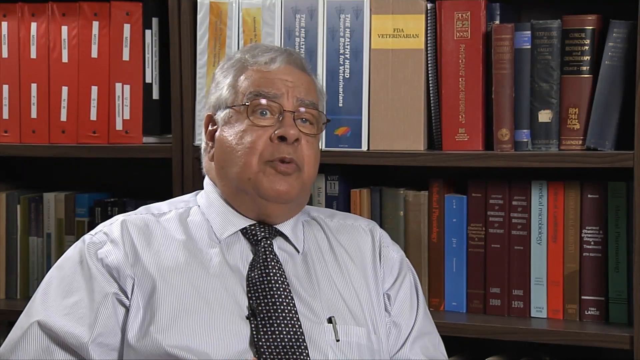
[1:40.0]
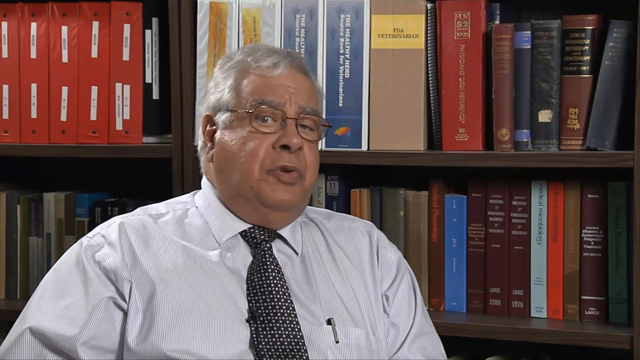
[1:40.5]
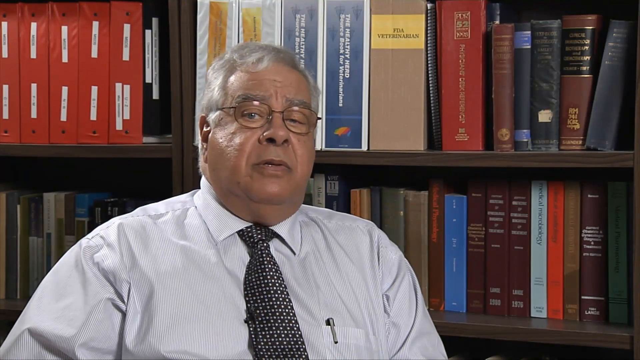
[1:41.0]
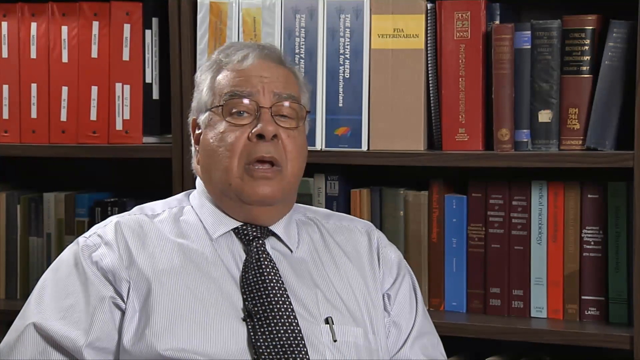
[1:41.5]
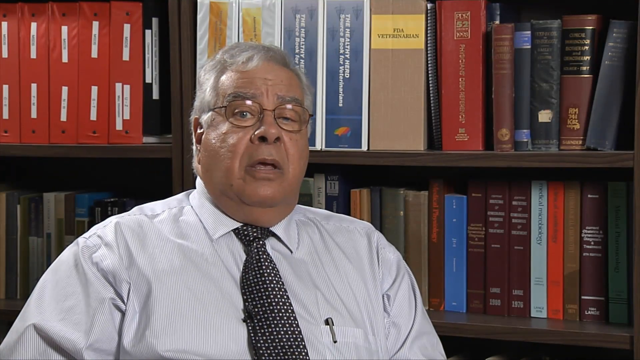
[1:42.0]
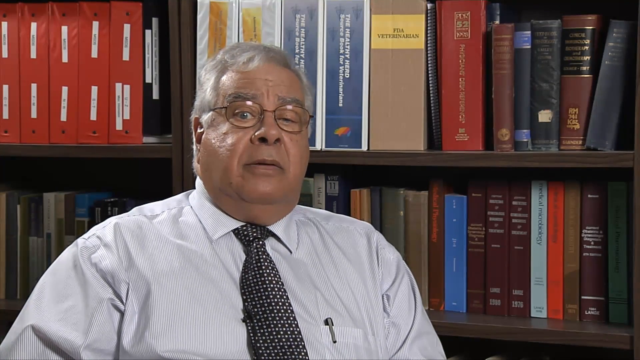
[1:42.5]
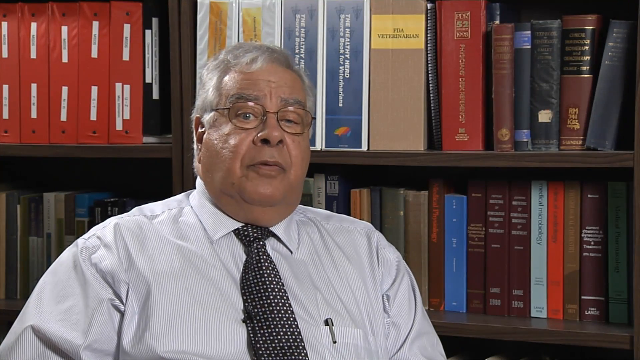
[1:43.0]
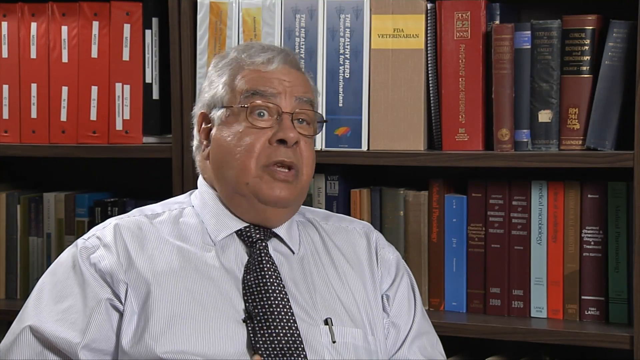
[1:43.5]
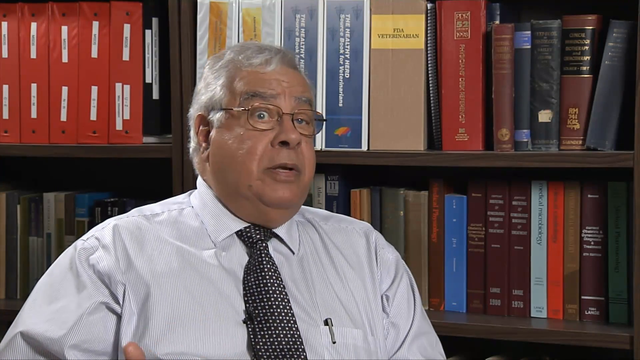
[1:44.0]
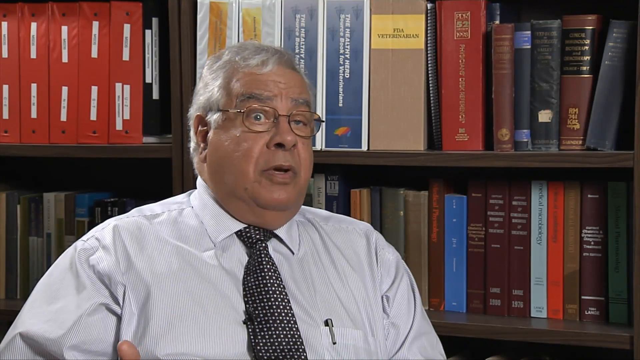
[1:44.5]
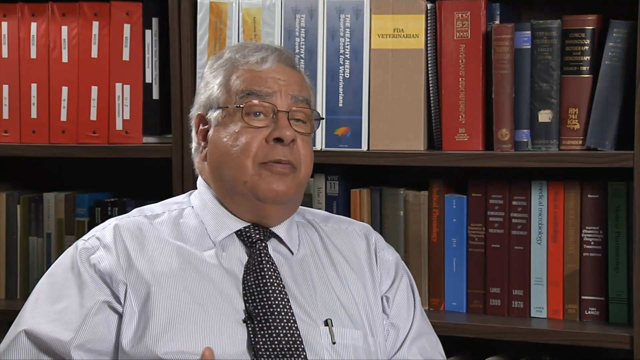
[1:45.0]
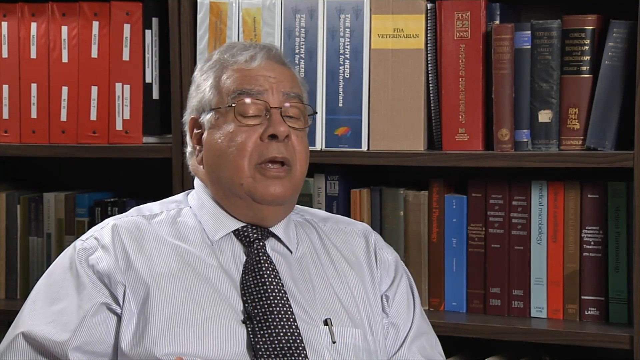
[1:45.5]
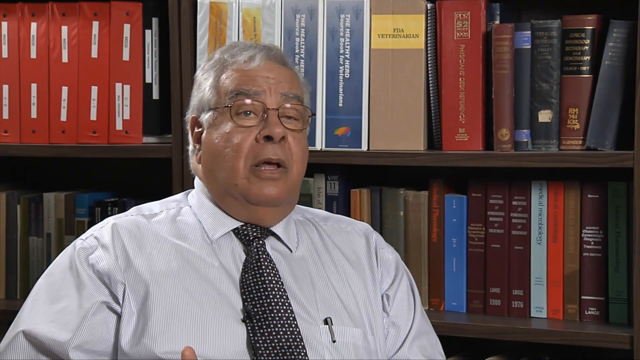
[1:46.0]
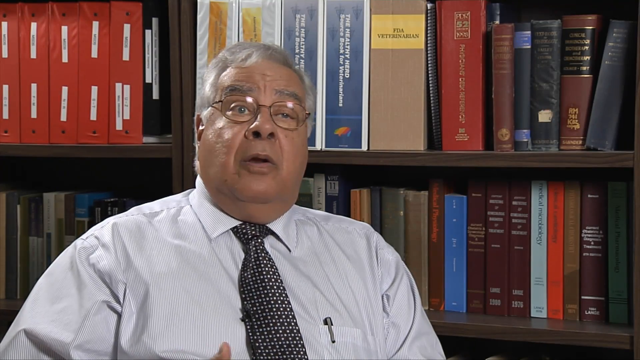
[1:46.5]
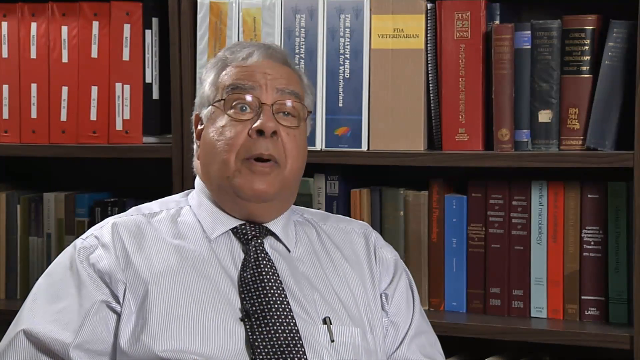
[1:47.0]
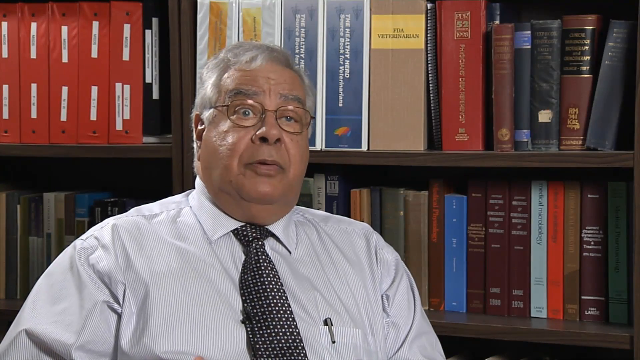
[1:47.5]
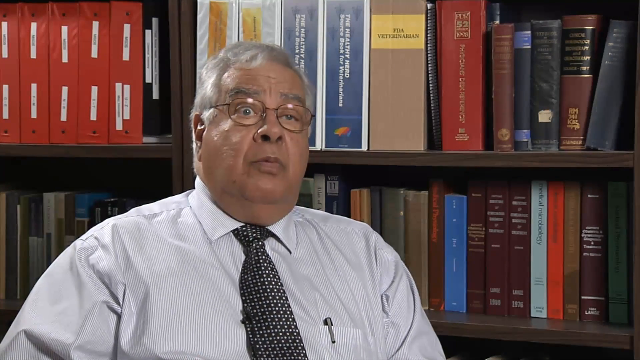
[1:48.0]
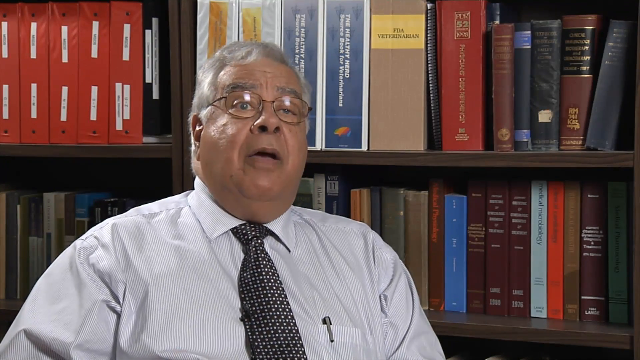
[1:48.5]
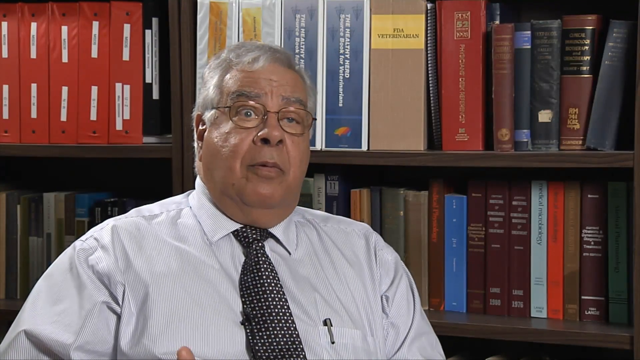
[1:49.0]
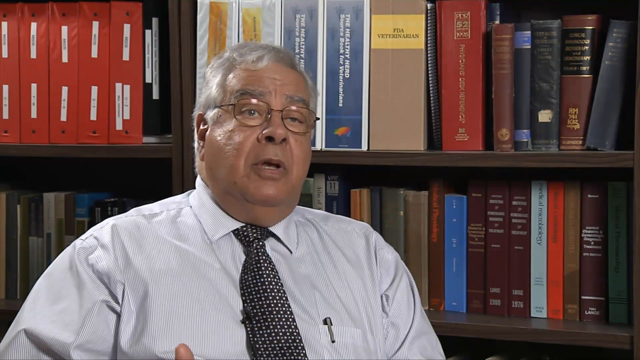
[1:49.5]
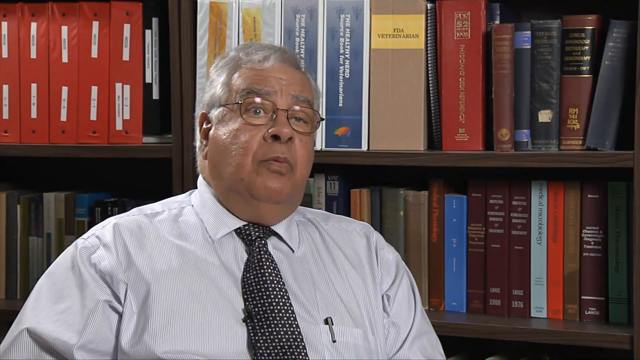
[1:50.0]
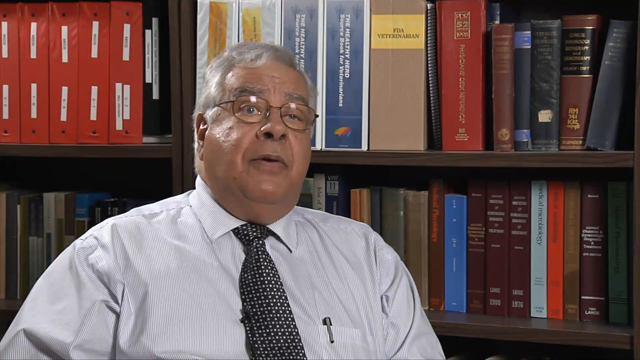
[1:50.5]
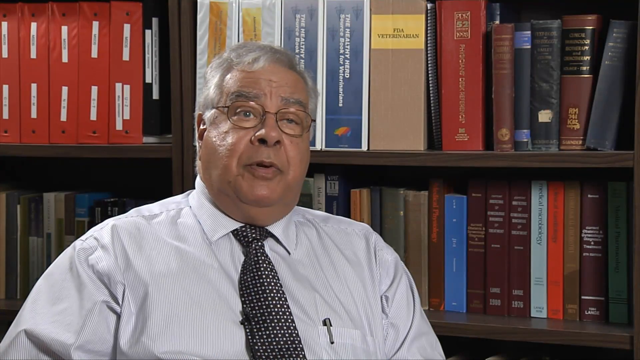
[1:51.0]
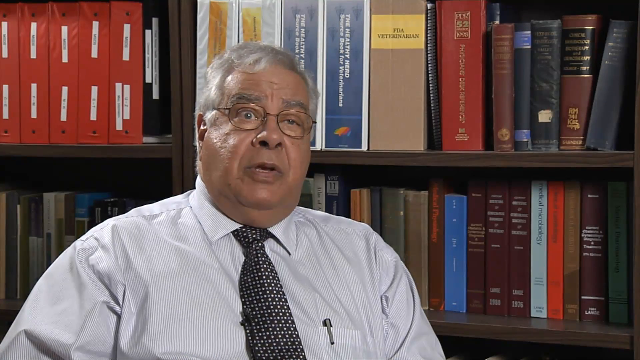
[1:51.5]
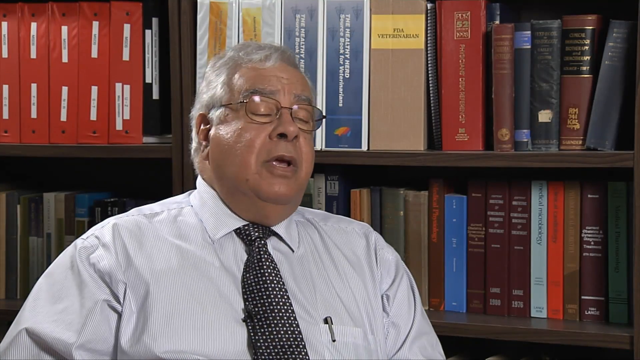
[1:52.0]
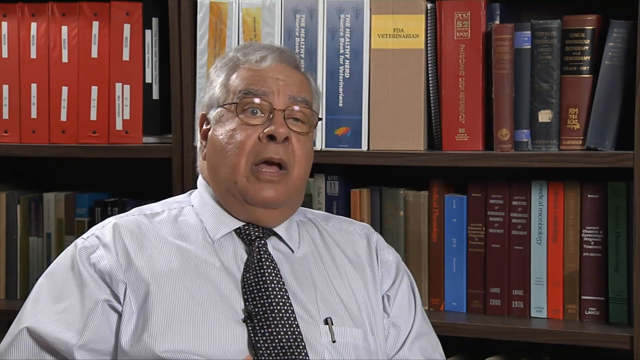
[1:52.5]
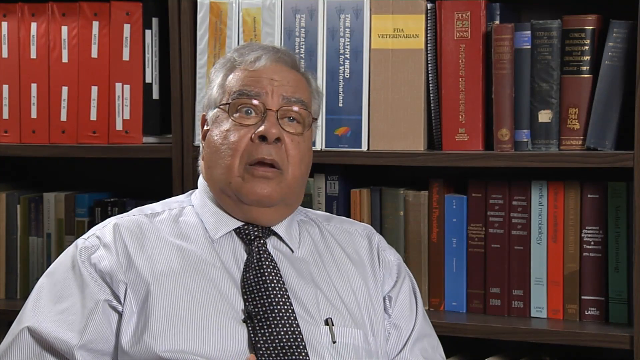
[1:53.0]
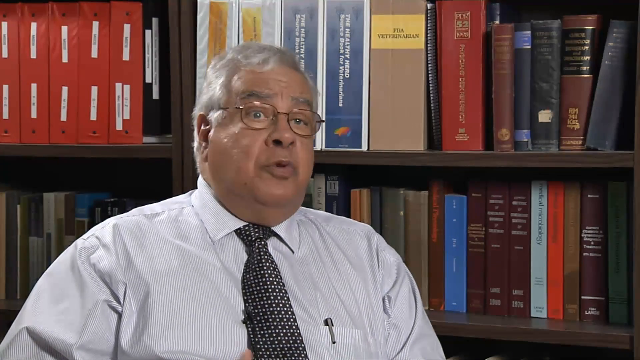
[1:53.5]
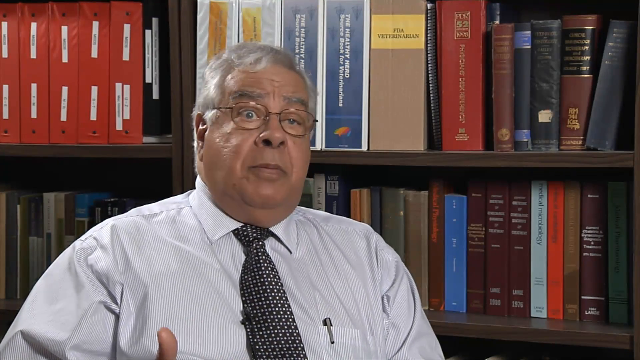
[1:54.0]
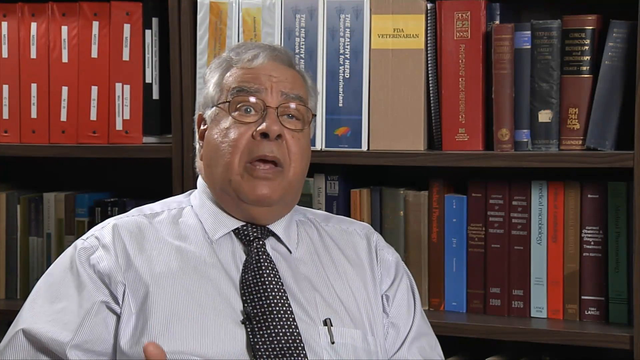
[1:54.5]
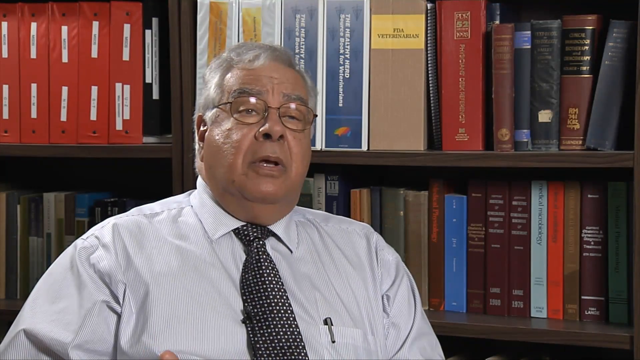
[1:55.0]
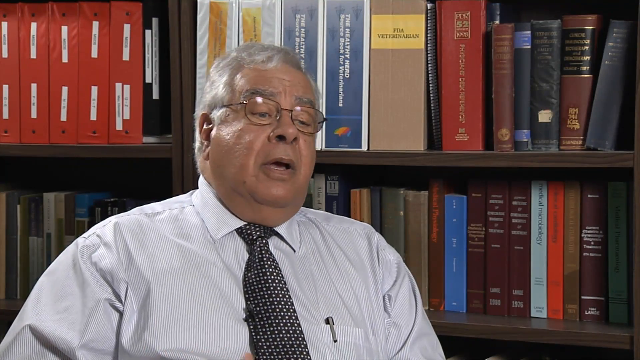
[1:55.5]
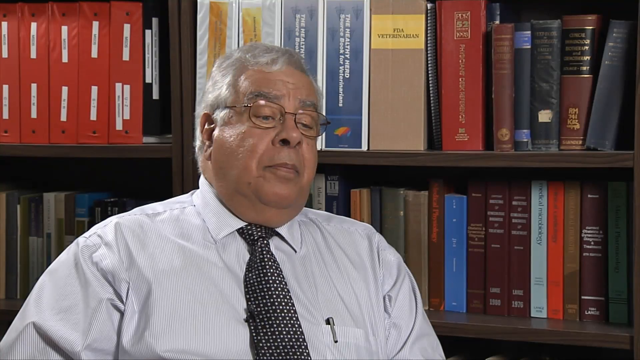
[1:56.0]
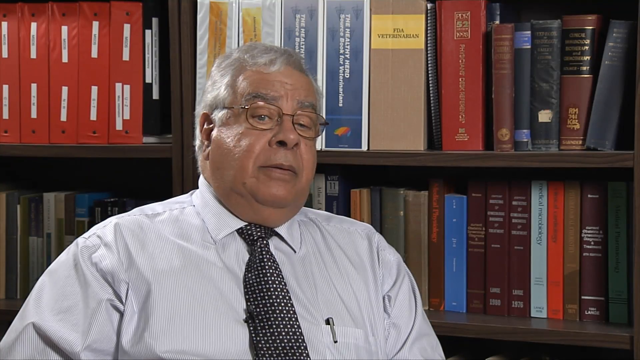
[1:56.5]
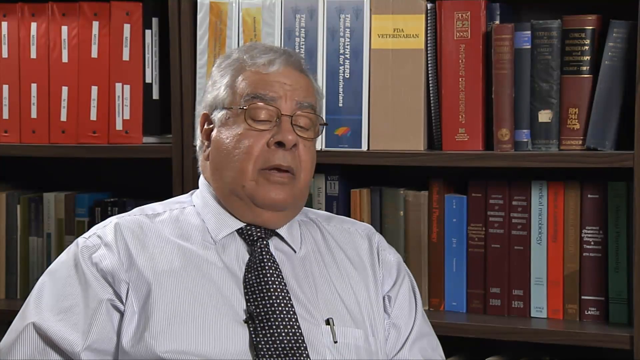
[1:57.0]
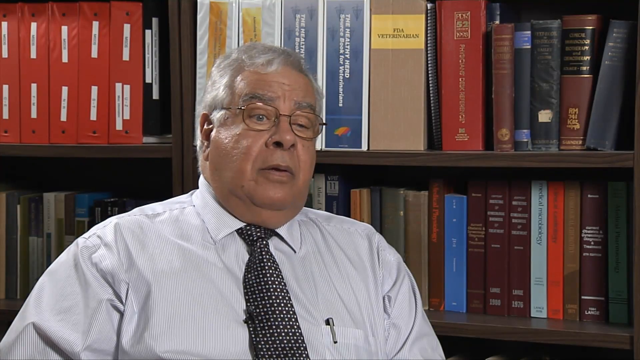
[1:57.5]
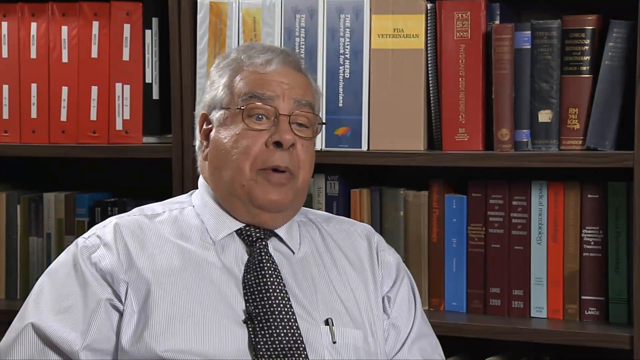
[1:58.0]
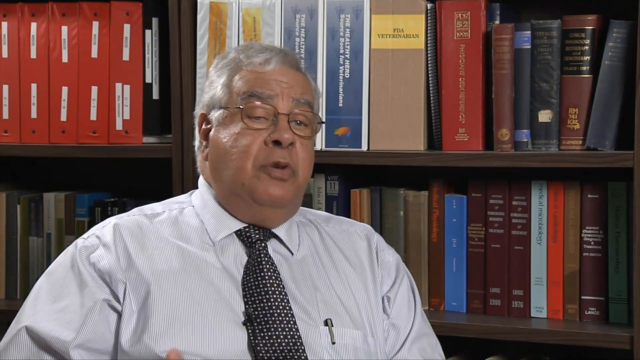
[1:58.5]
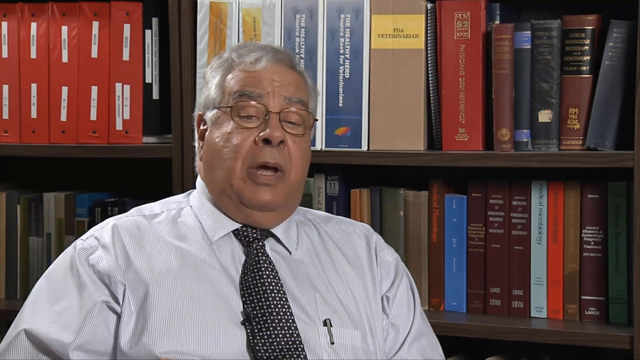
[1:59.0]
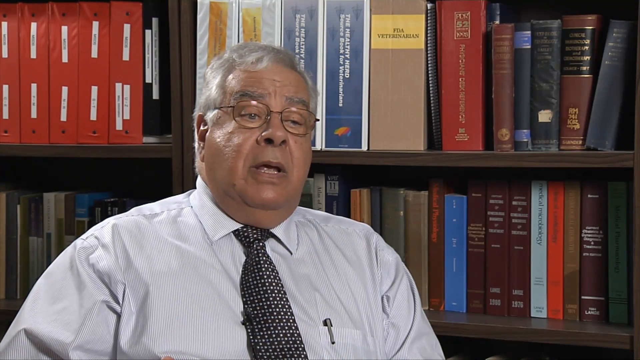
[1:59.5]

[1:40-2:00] The same doctor is being interviewed, in the same shirt, tie and glasses. He is sitting in front of the backdrop of book shelving, which could be a library or his office. He is still with the interviewer and hasn't really moved around. No illustrations, slides or additional bullet points appear.